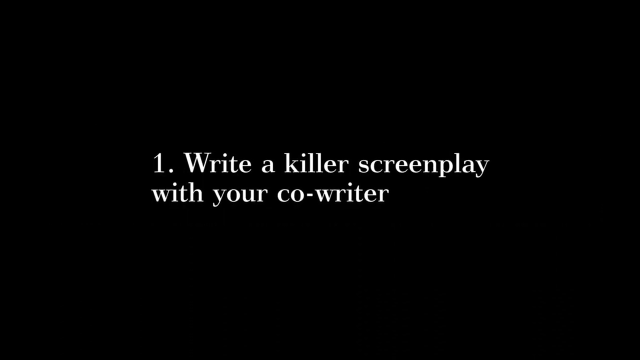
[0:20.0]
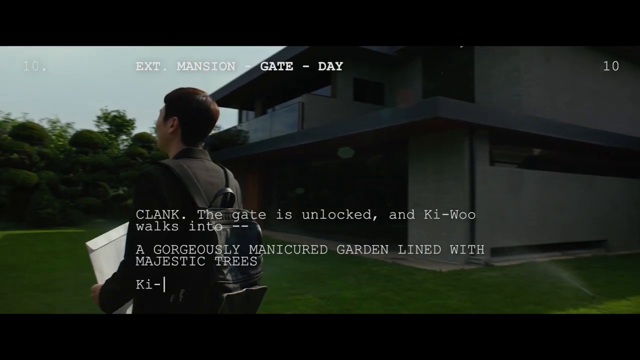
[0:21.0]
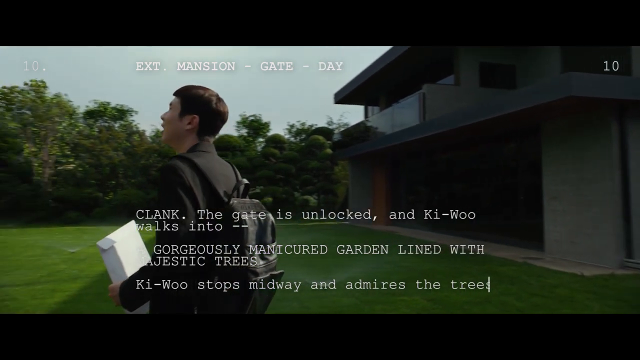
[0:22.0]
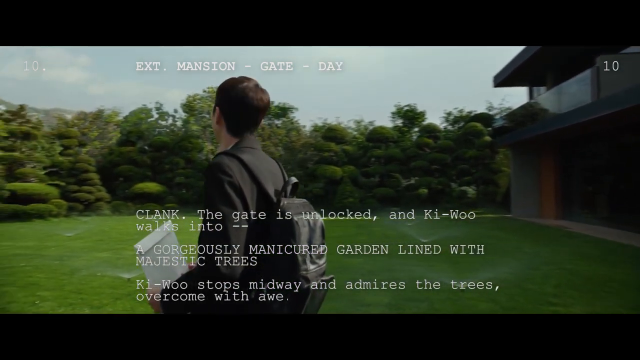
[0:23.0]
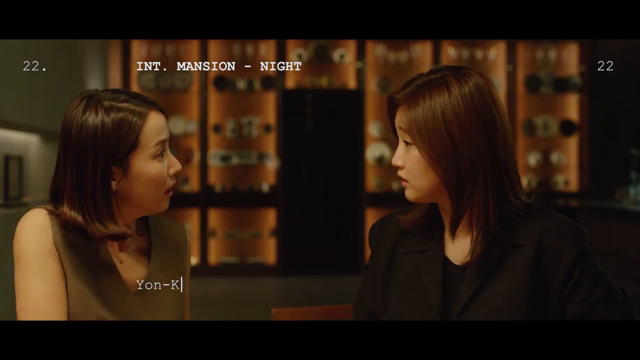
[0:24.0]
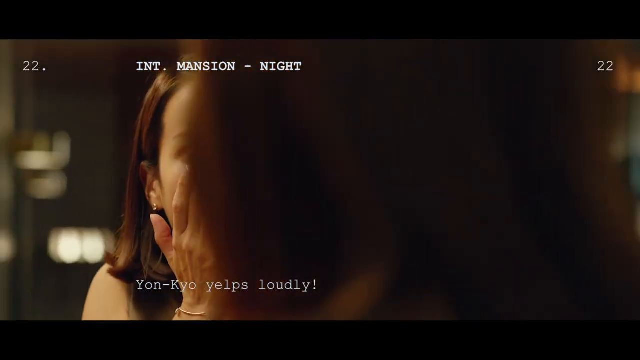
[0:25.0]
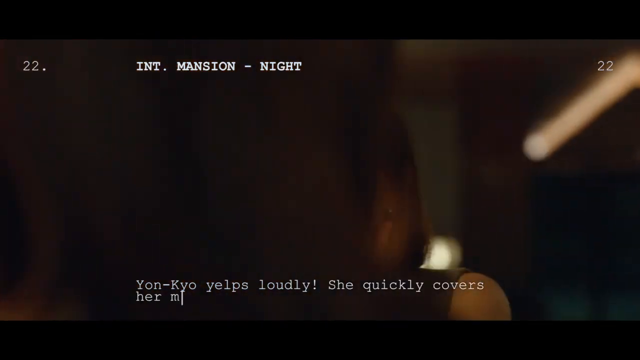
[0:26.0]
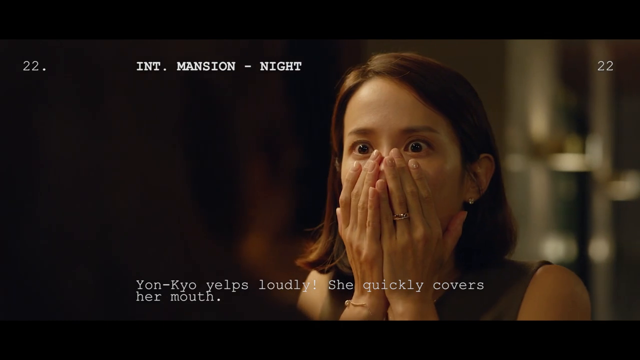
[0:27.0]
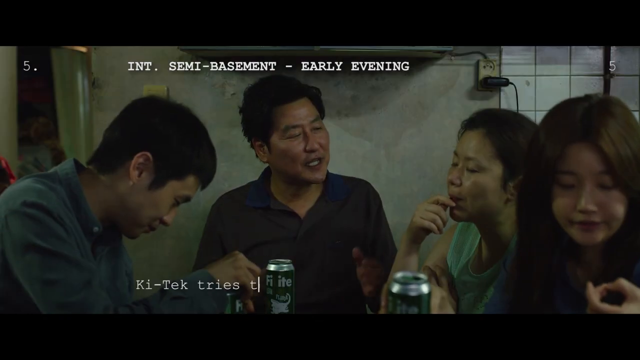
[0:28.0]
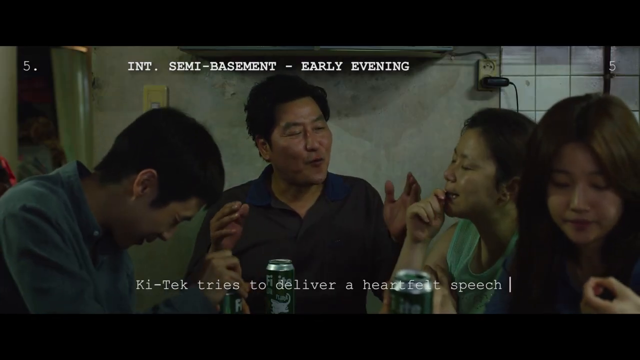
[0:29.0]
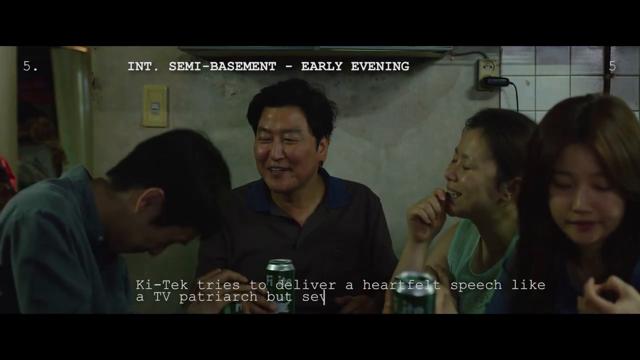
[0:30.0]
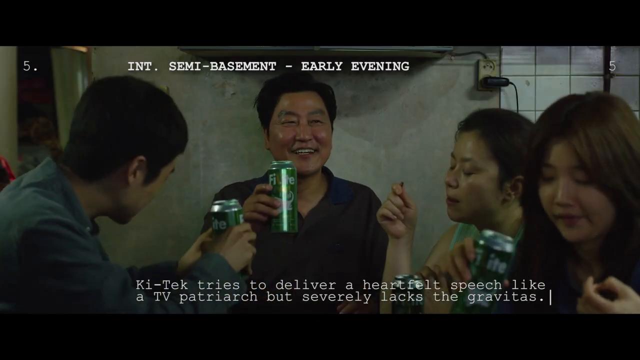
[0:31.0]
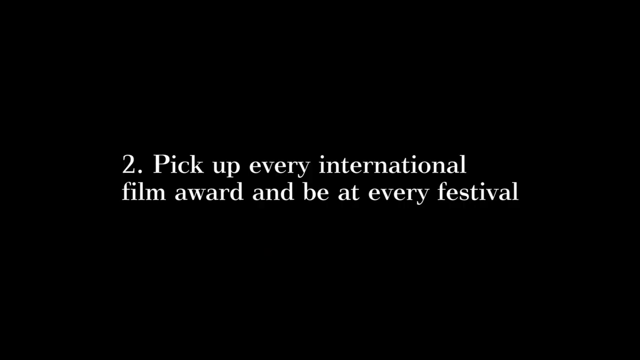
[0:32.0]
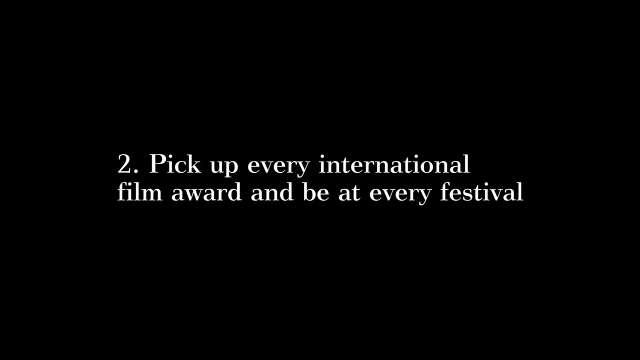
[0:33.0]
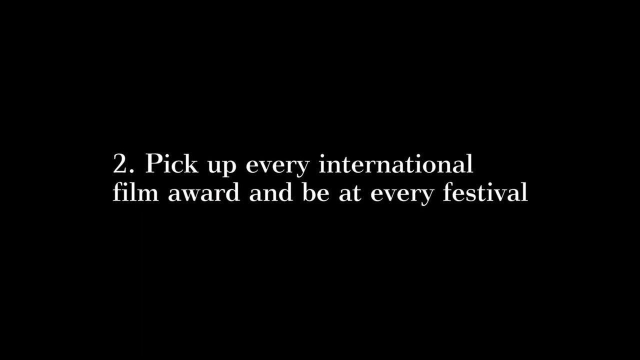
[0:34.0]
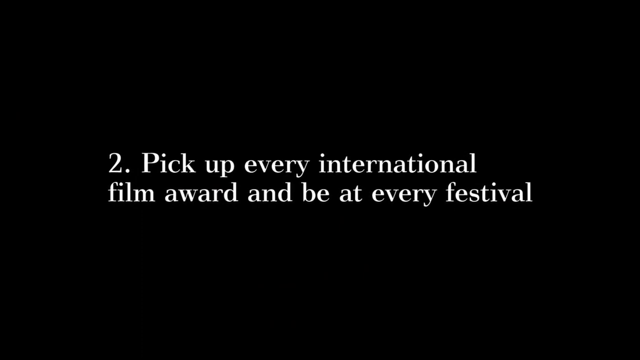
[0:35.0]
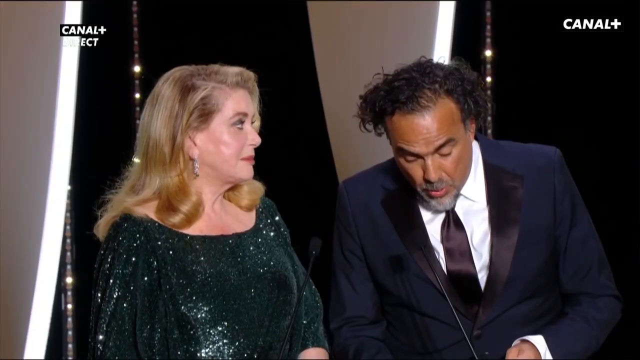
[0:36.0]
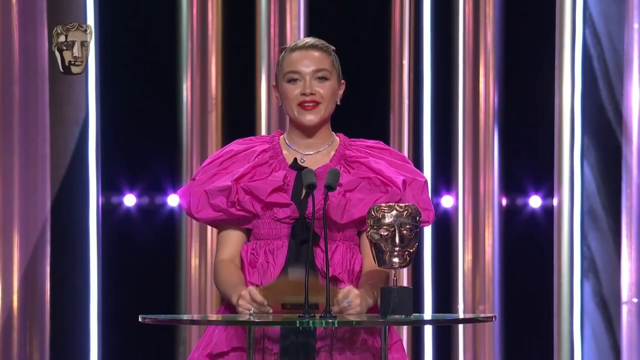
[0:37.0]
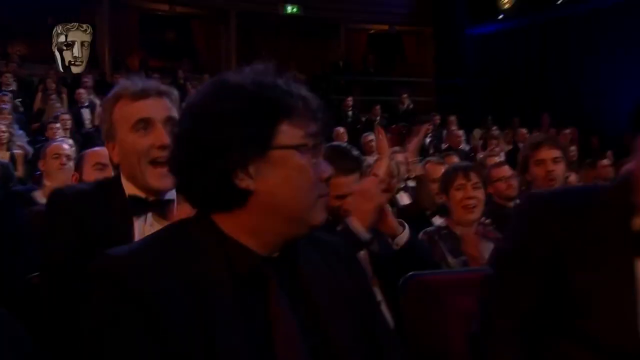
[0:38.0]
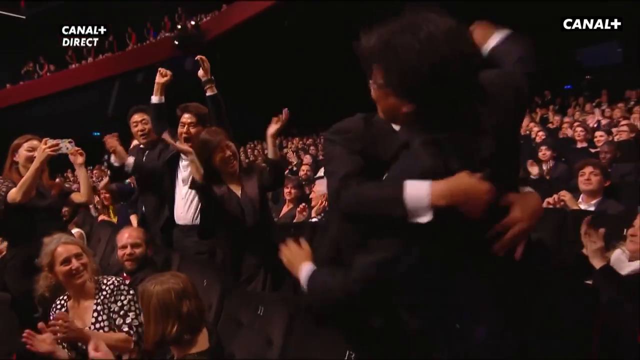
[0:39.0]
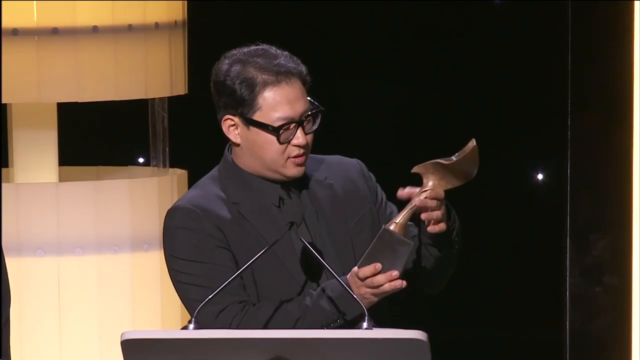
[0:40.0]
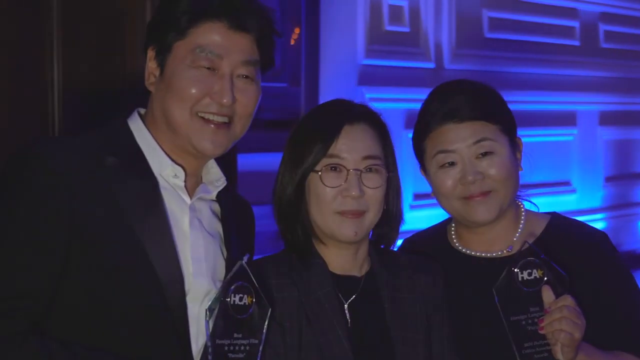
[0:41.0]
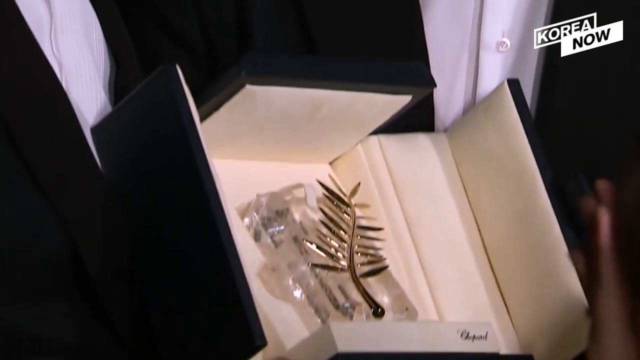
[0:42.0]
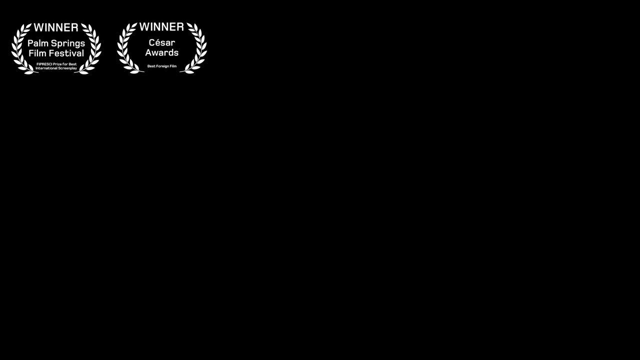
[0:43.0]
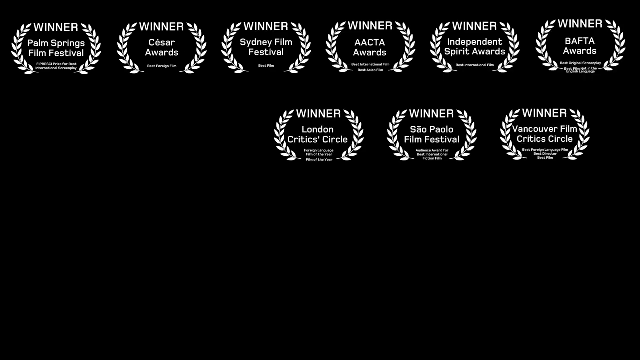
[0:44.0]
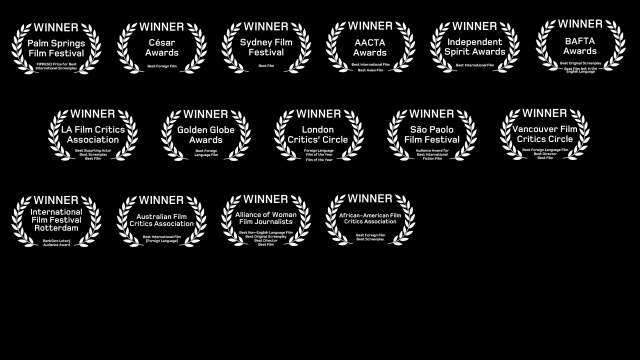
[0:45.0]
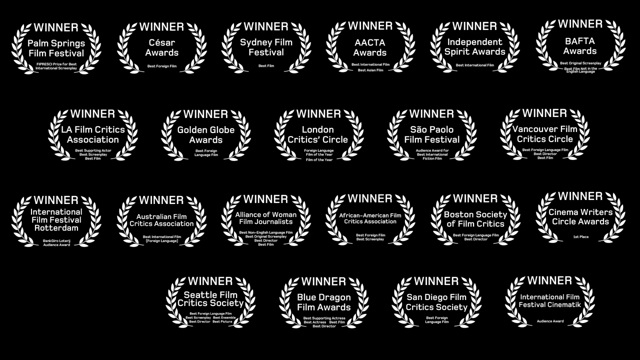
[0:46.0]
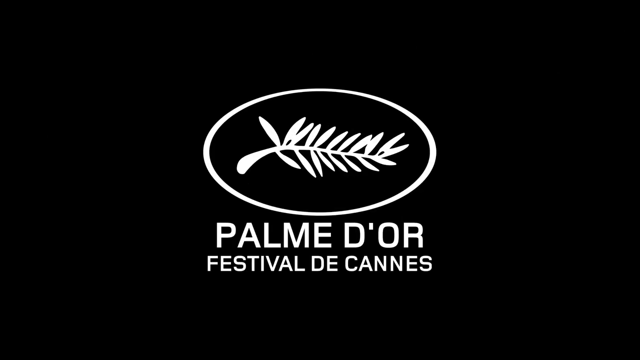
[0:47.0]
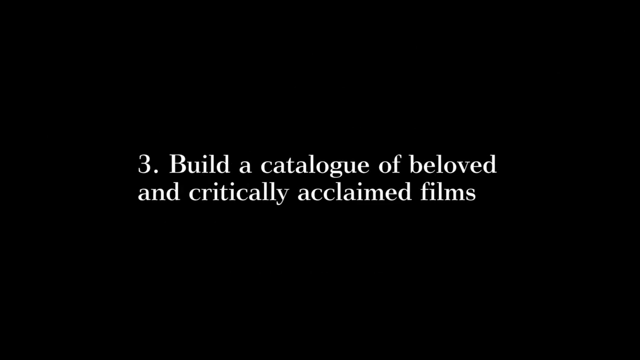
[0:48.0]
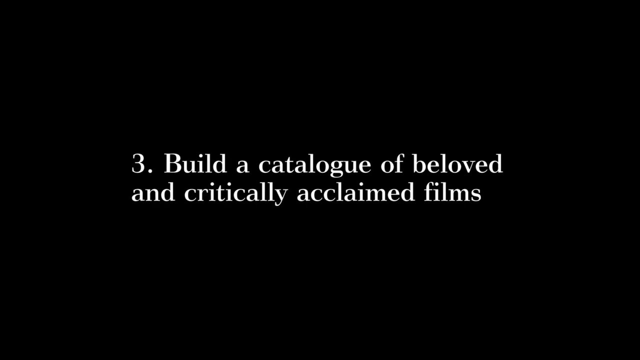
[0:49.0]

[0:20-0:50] The first award seems to be announced for a screenplay. The video then seems to show how it was filmed, and the screenplay kind of appears. A short preview clip follows in which men and women drink alcohol. The video then returns to the award ceremony, where a man and a woman appear. Another woman, unclear whether she is the winner or a presenter, wears a pink top, has a beautiful hairstyle, red lipstick and a beautiful necklace, and the background behind her is very beautiful. The award seems to look like the face of a man in gold.